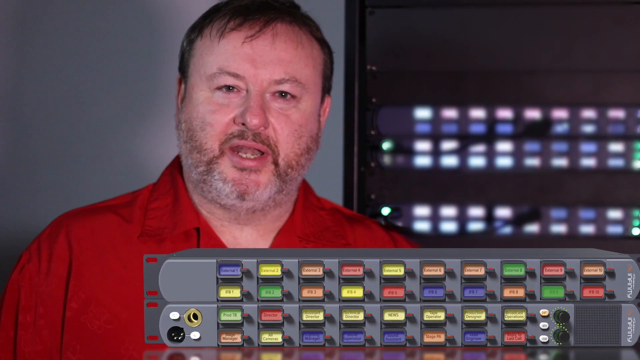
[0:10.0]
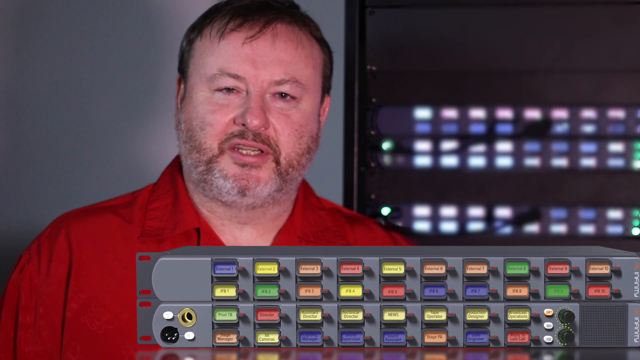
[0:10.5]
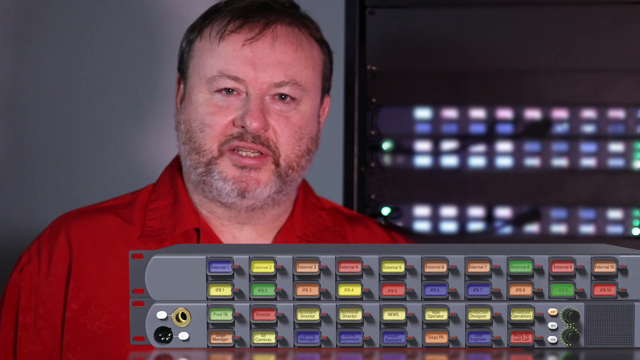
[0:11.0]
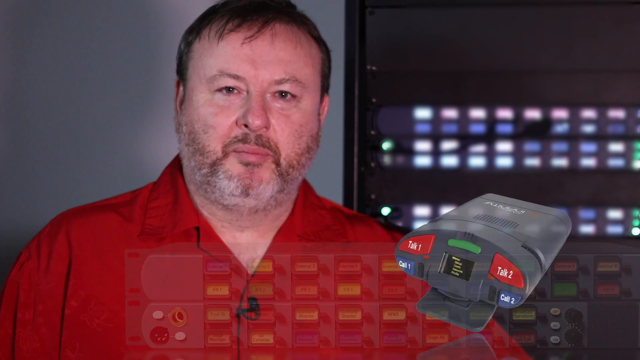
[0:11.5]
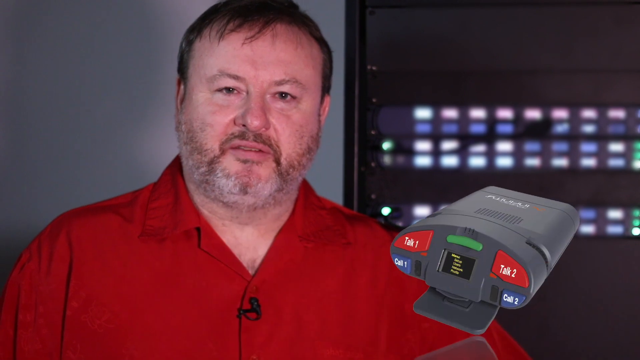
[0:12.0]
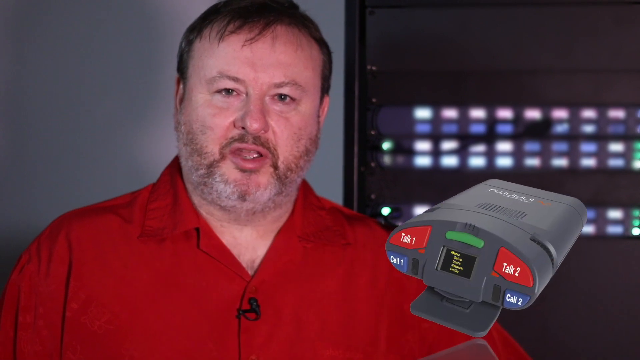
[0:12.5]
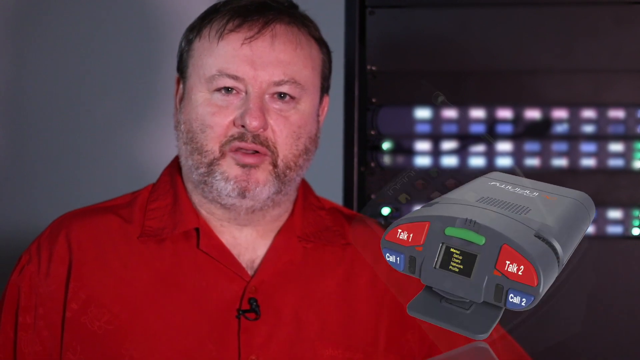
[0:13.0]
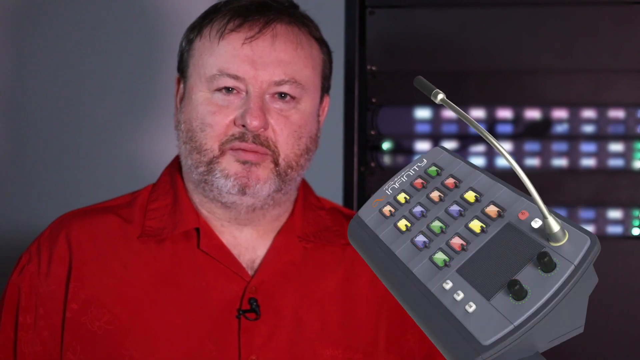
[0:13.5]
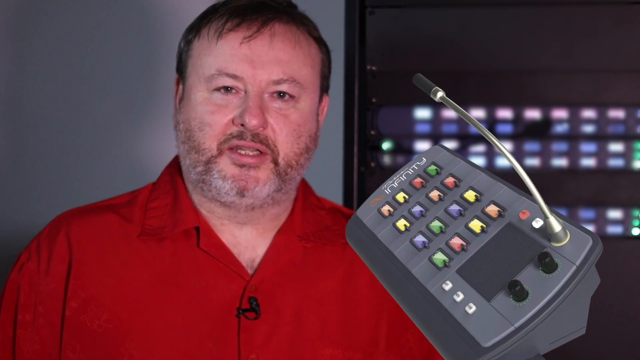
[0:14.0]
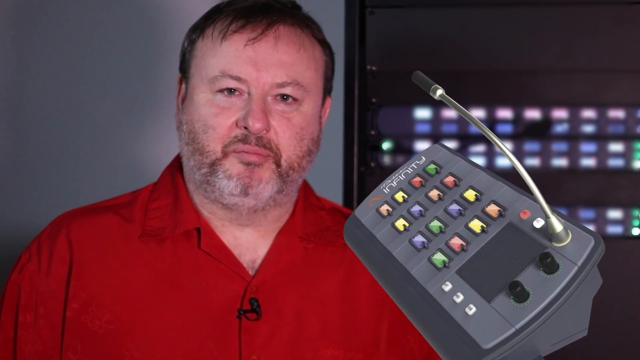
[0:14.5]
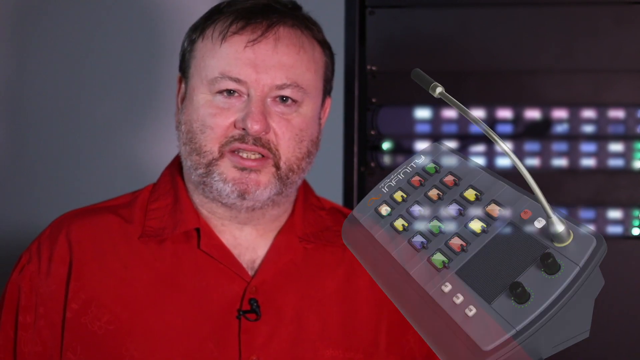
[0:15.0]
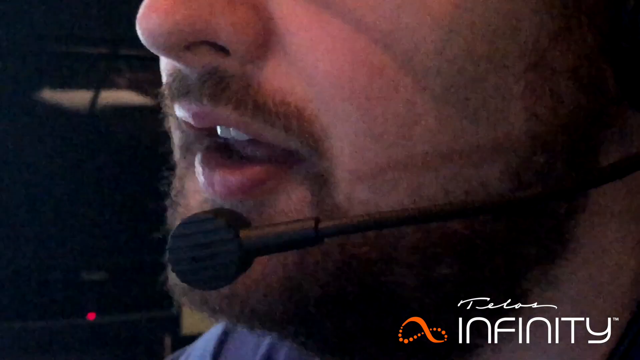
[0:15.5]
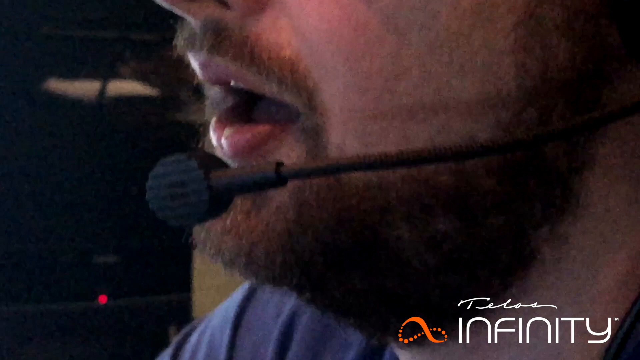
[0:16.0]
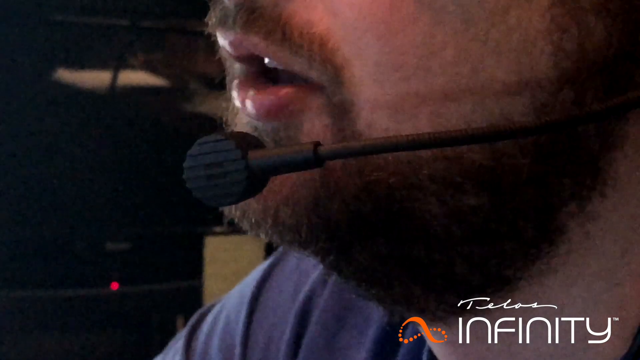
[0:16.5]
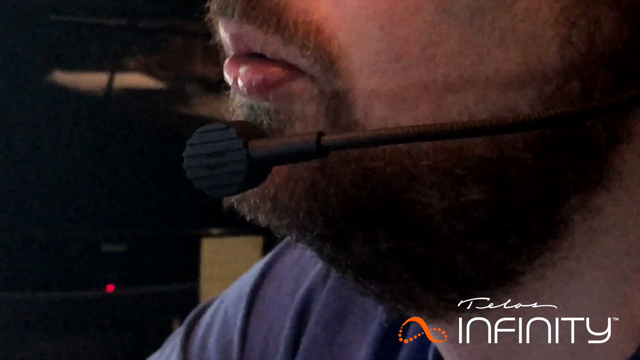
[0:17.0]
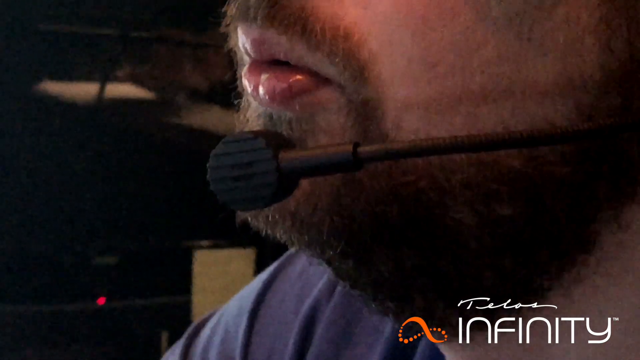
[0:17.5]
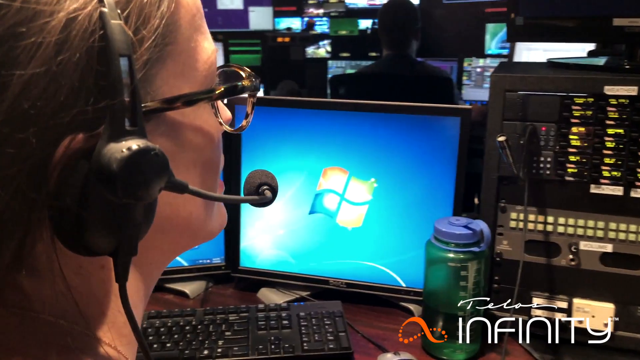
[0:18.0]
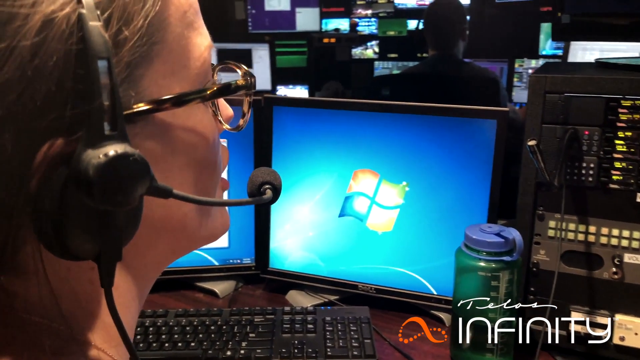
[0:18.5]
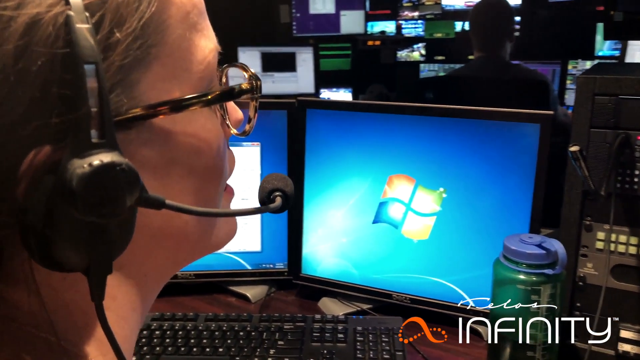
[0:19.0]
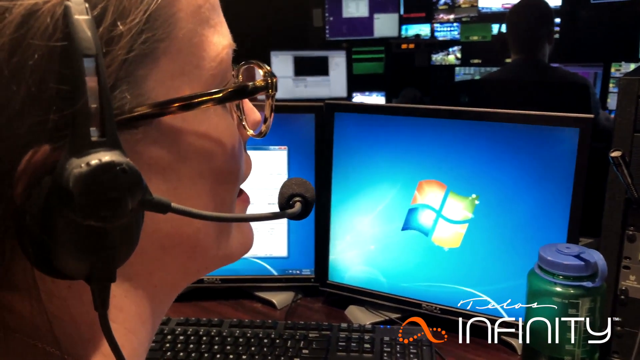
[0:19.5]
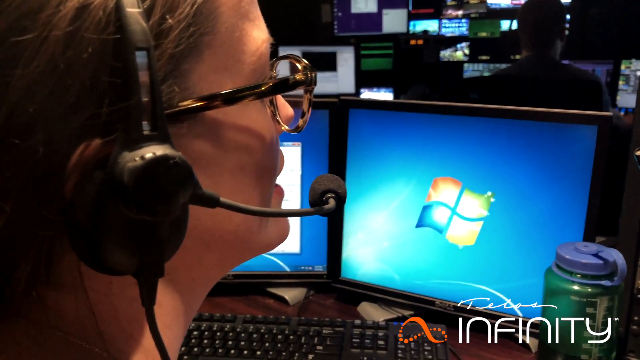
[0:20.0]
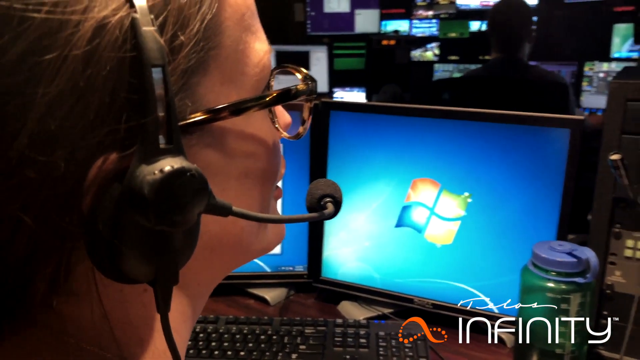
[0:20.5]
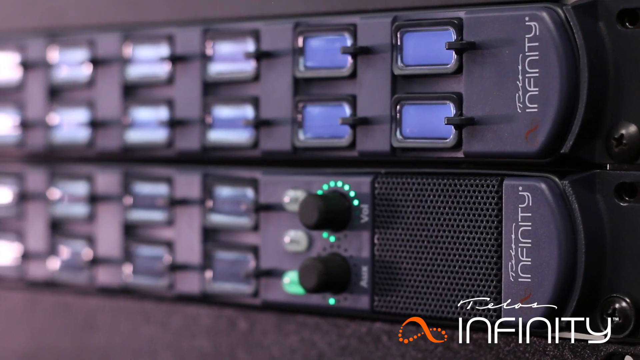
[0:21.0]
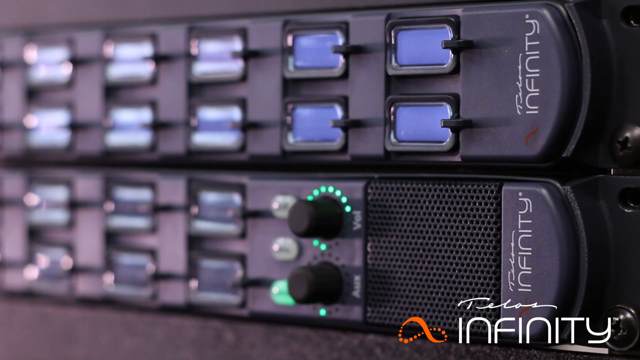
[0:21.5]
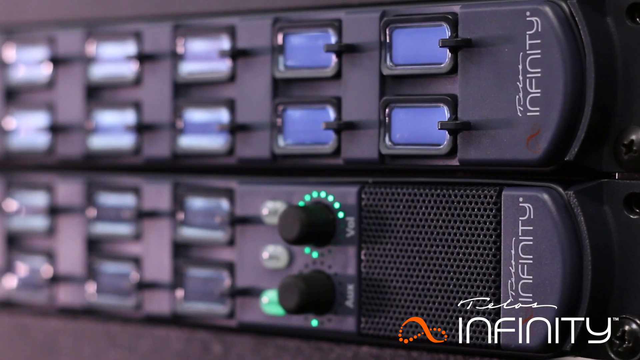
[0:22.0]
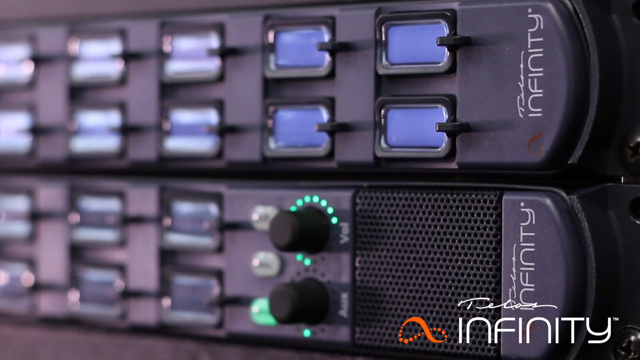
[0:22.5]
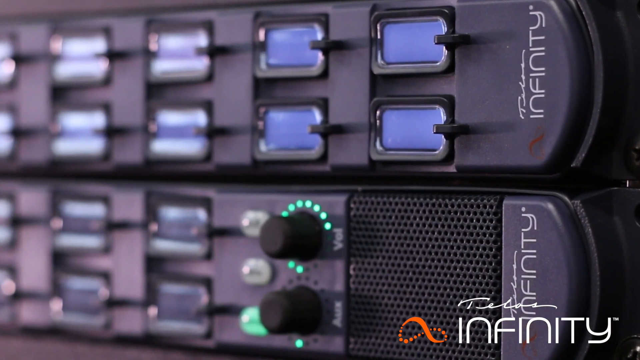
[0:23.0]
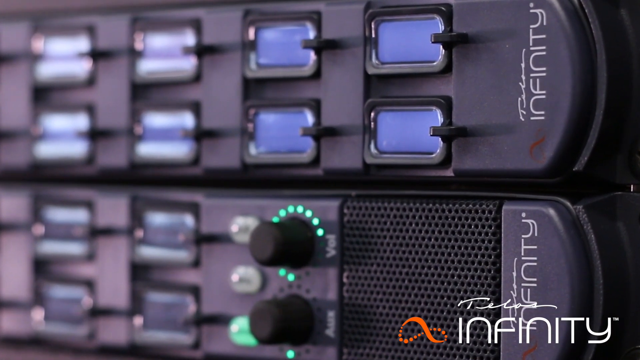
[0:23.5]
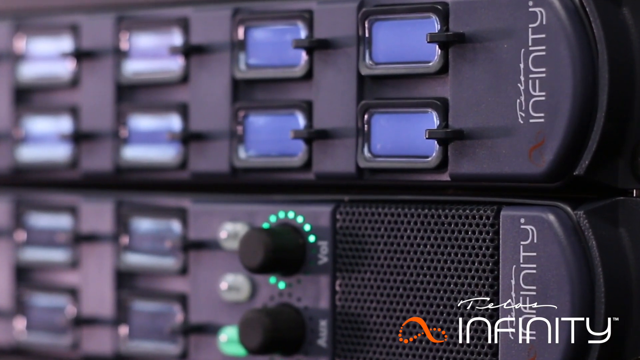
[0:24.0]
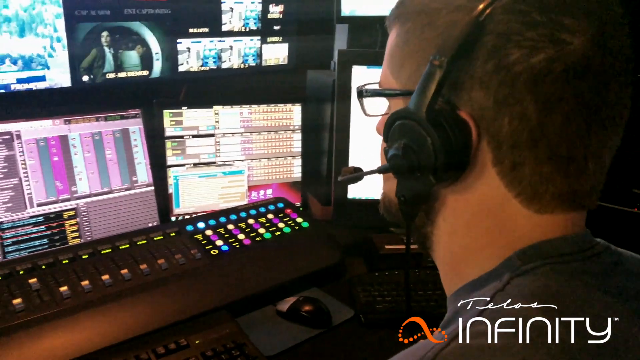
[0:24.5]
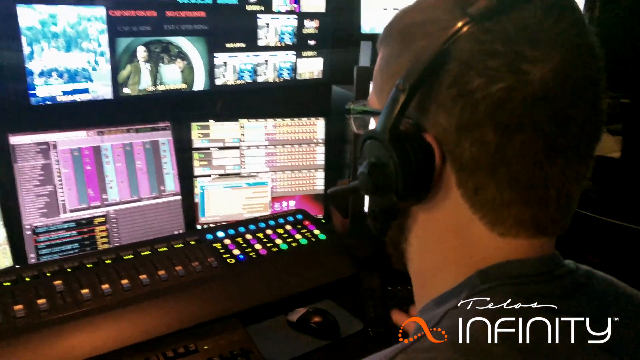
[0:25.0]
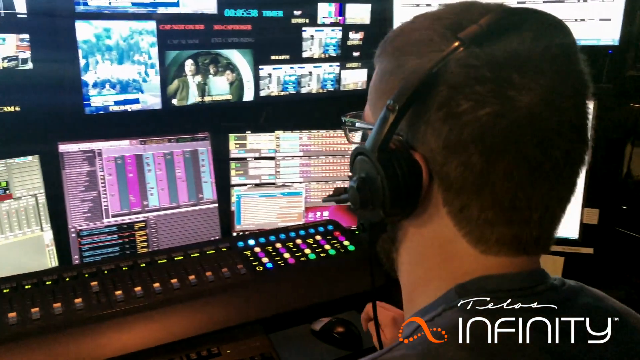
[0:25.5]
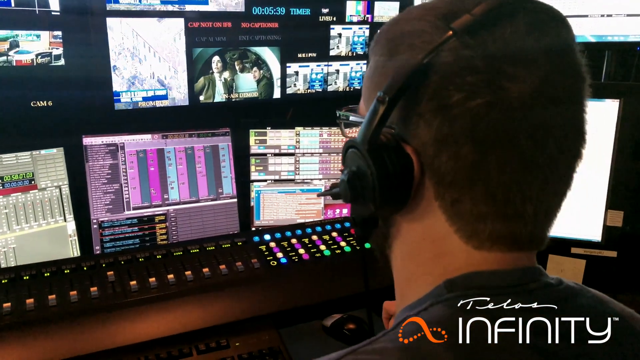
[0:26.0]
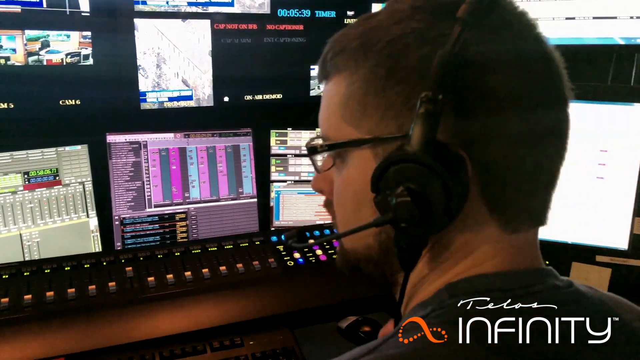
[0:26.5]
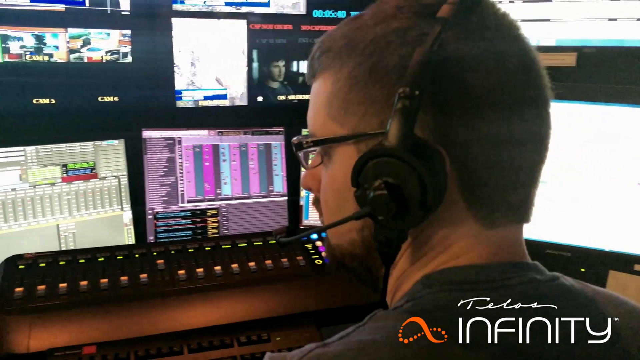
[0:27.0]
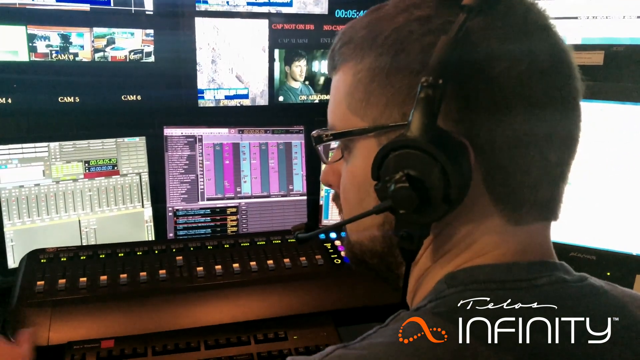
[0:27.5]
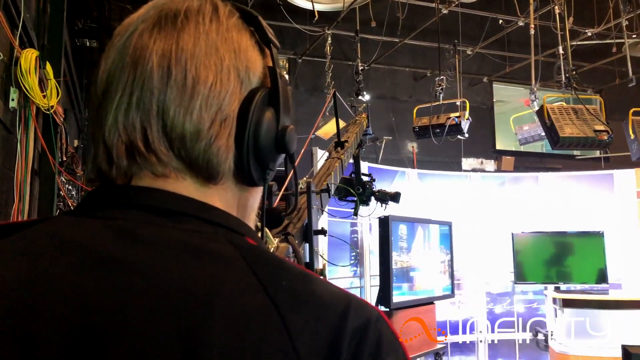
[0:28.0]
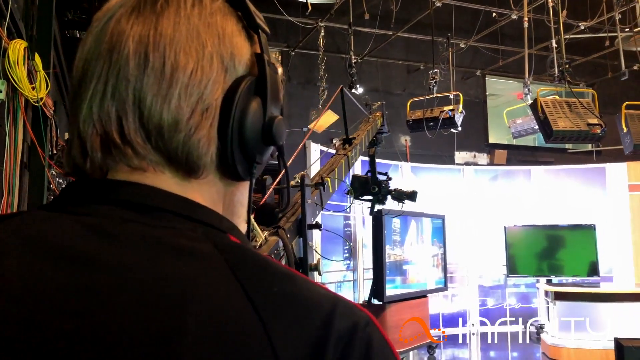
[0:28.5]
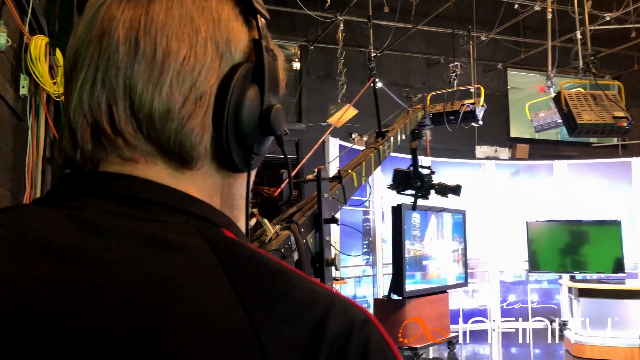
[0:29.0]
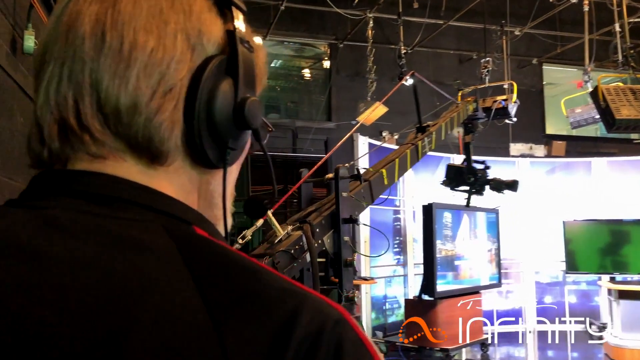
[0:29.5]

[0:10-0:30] A woman's face and head appear on the left side of the screen. She wears glasses and a headset with the microphone on her right ear. In front of her are two monitors; the left one cannot be seen, while the right one shows the Microsoft logo. To the right is a water bottle, and to the right of that, at the far right of the screen, is a device with many buttons. She sits in a room full of monitors, some of them lit up, and talks into the microphone. The screen changes to two Infinity devices, one on top of the other, on the right side of the screen. Next, a man sits with his back to the camera on the right side of the screen, wearing glasses and a headset with the microphone on the left; he has a mustache. He sits in front of several monitors, with keyboards in front of him that have fewer, larger buttons than a typical keyboard, and other monitor screens behind the screens in front of him. The scene changes to the back of the head of a balding man in a black shirt wearing headsets, with a cord dangling beneath the right ear muff. He holds a stringed instrument with a bow attached to it. On the right side of the room are monitors in the bottom right corner, above them a monitor displayed from the ceiling, and other hardware suspended from the ceiling in the center of the frame. Then a Caucasian man wearing glasses speaks on the right side of the screen.